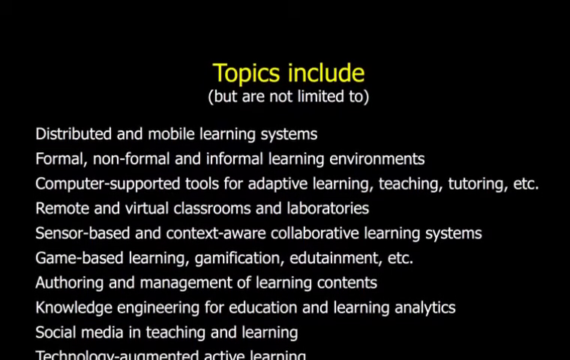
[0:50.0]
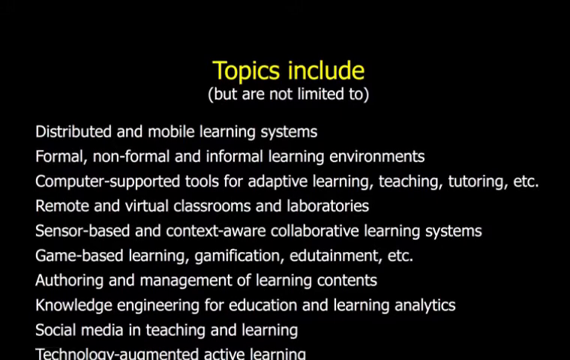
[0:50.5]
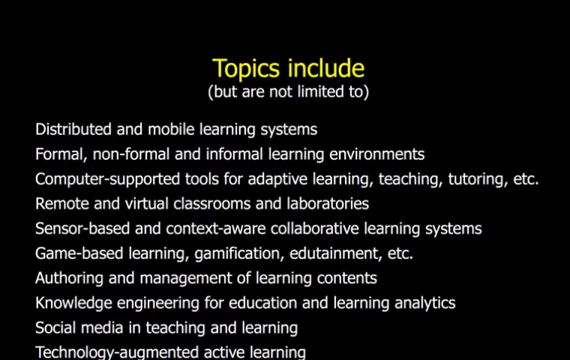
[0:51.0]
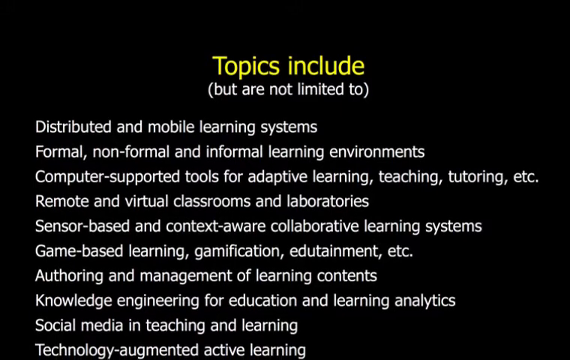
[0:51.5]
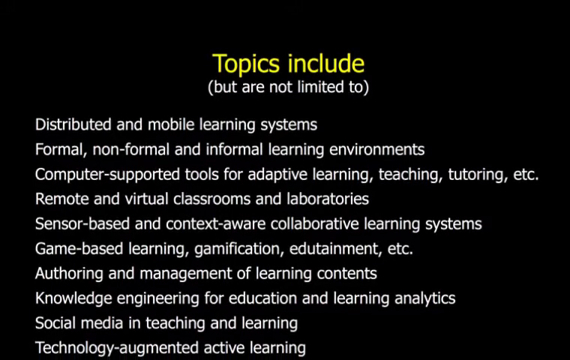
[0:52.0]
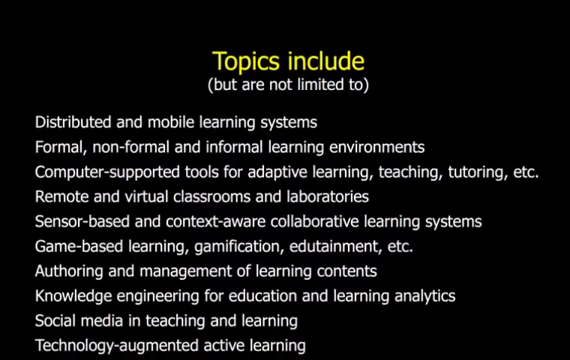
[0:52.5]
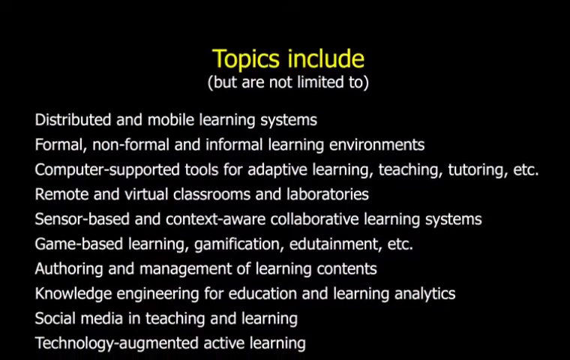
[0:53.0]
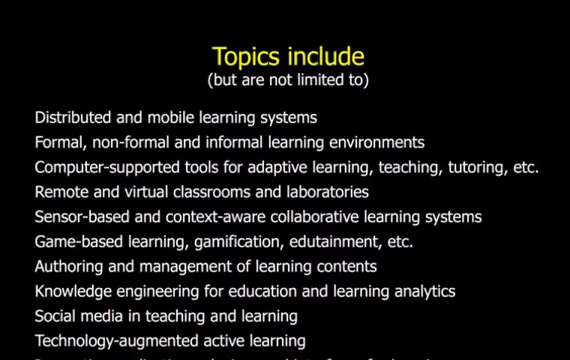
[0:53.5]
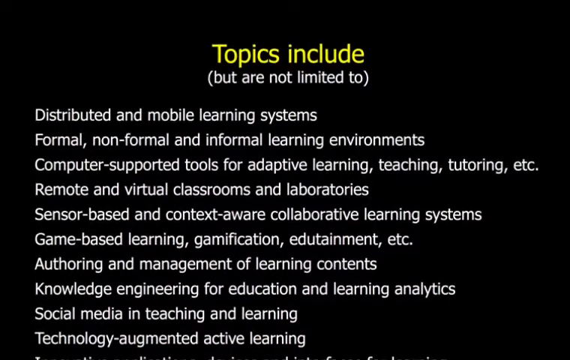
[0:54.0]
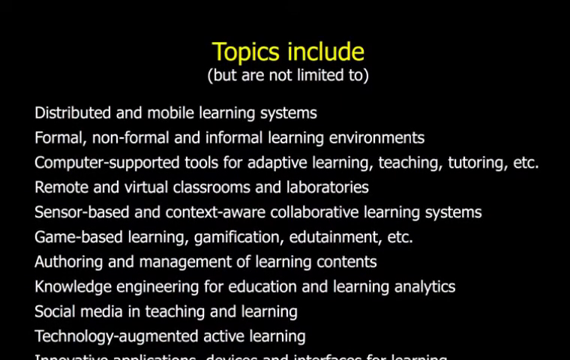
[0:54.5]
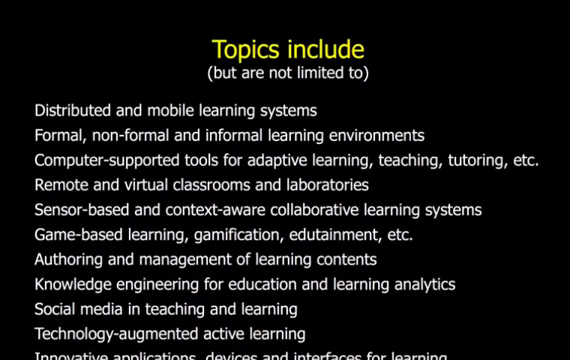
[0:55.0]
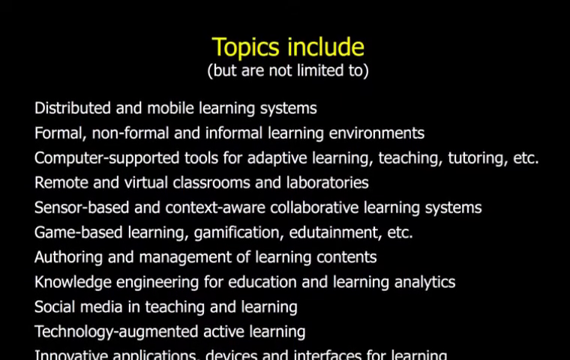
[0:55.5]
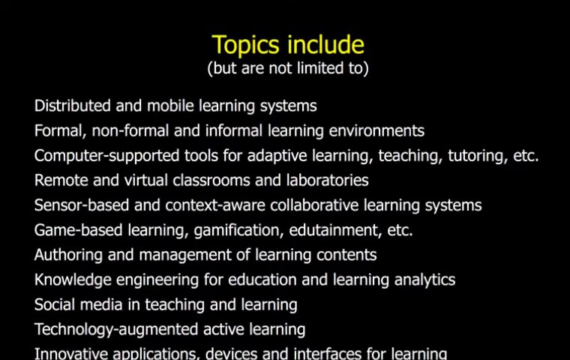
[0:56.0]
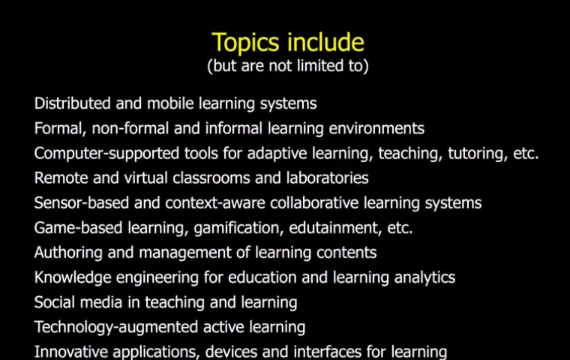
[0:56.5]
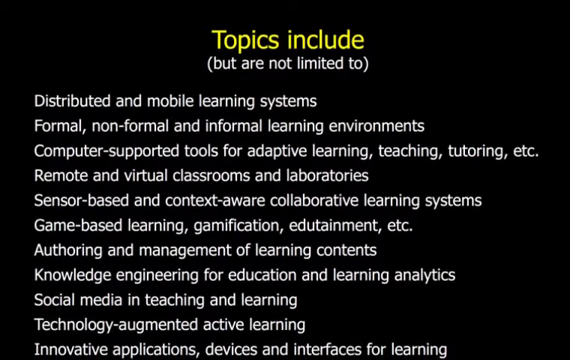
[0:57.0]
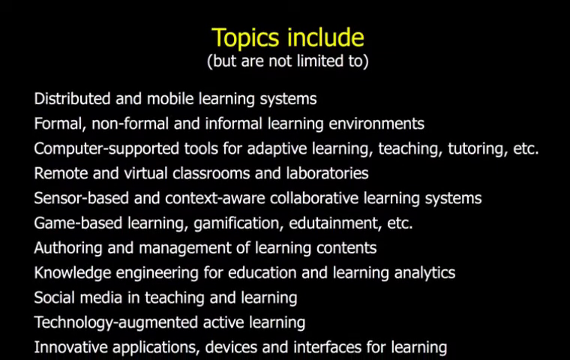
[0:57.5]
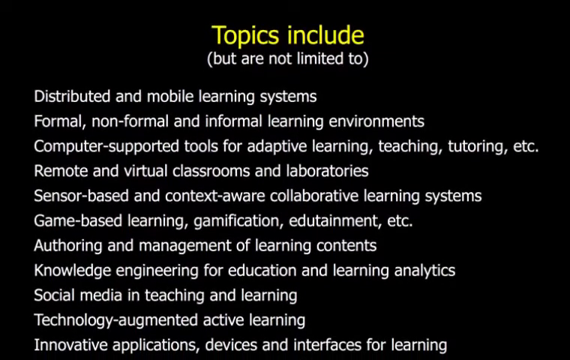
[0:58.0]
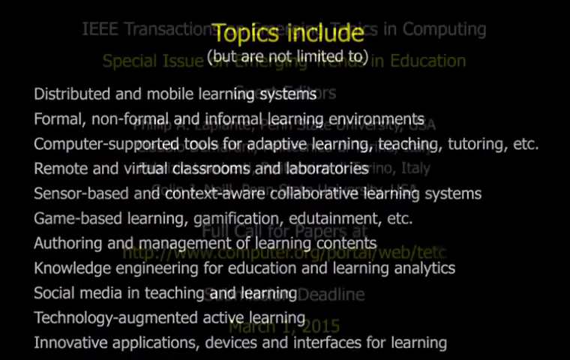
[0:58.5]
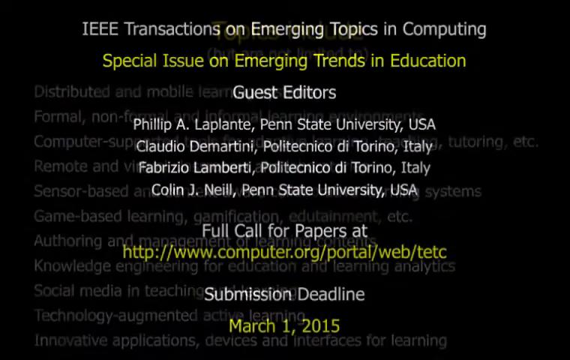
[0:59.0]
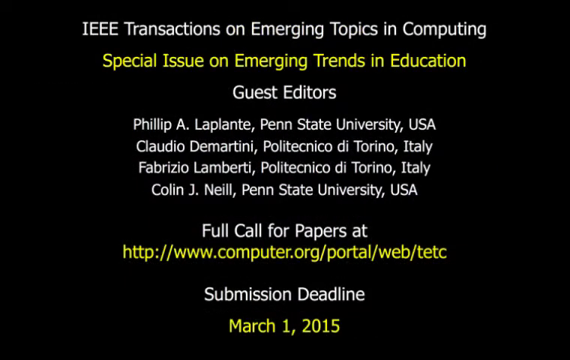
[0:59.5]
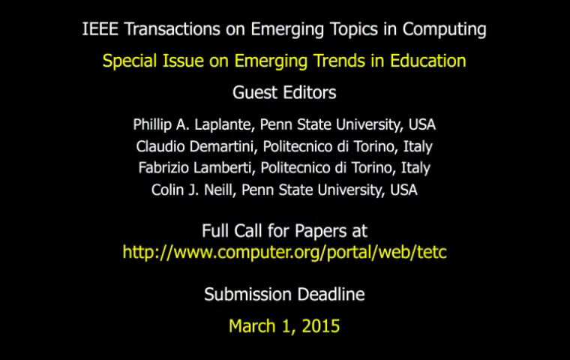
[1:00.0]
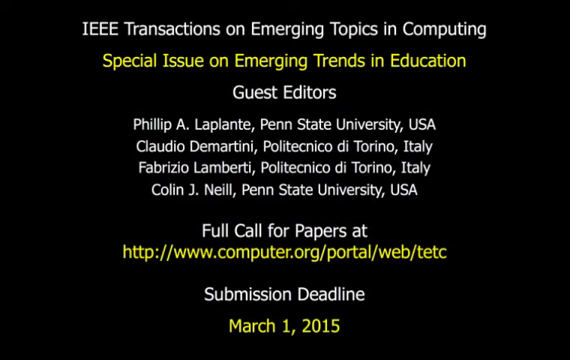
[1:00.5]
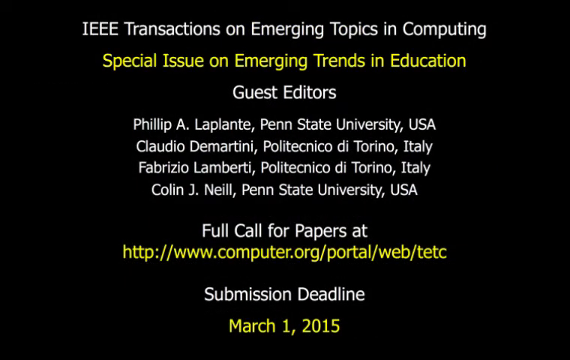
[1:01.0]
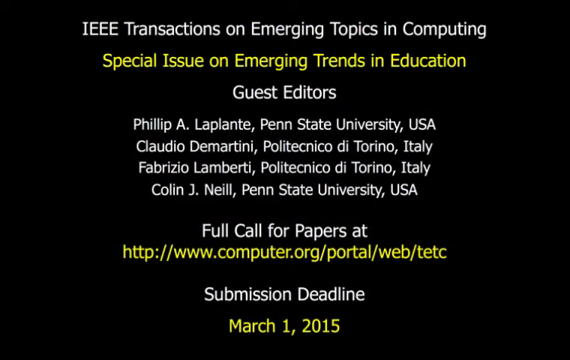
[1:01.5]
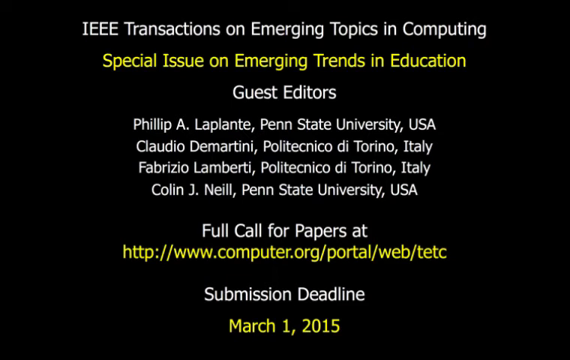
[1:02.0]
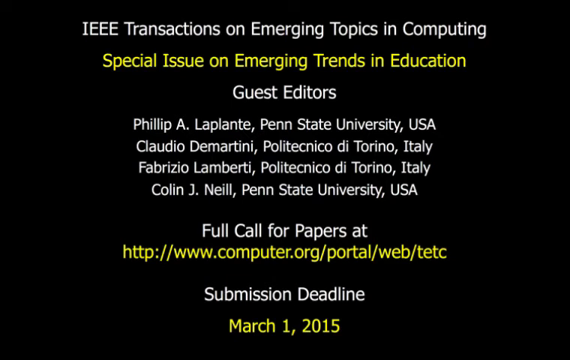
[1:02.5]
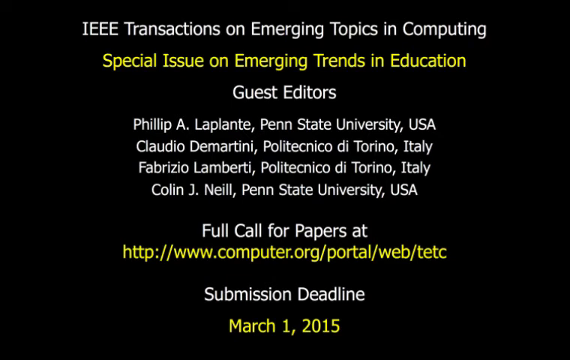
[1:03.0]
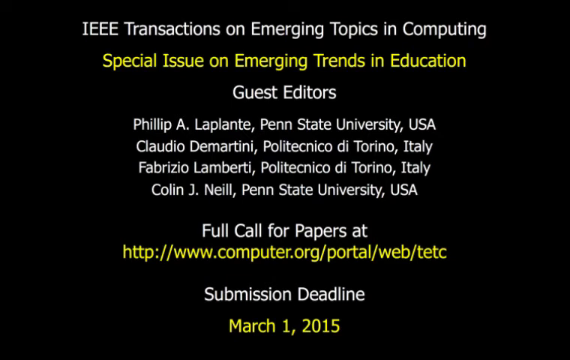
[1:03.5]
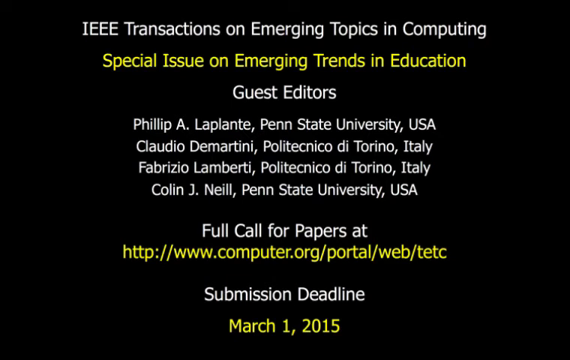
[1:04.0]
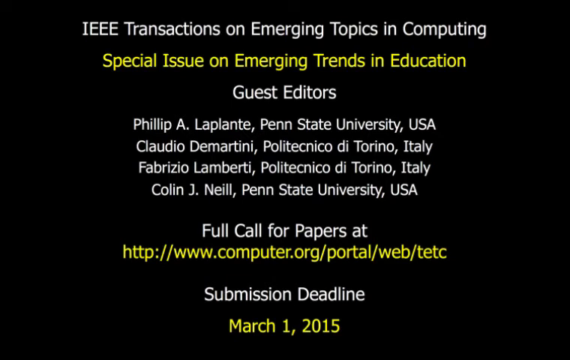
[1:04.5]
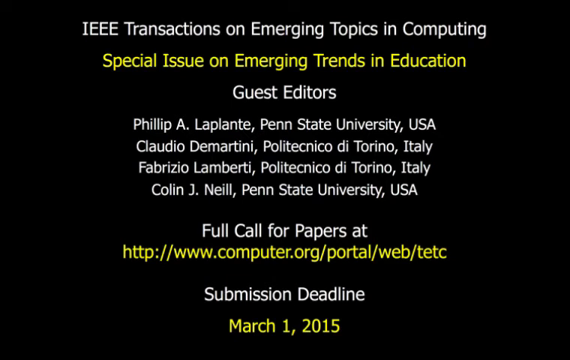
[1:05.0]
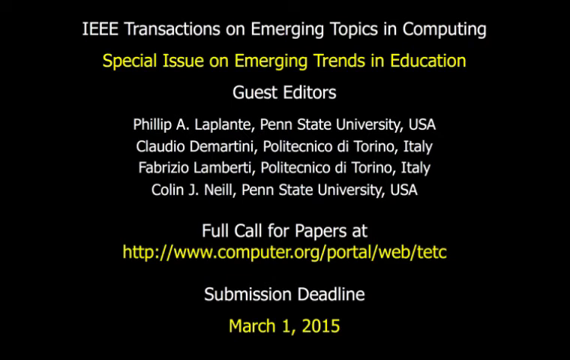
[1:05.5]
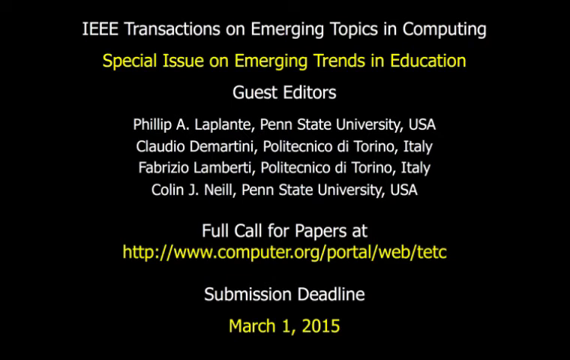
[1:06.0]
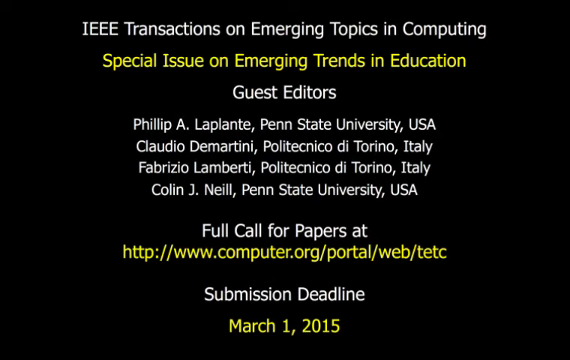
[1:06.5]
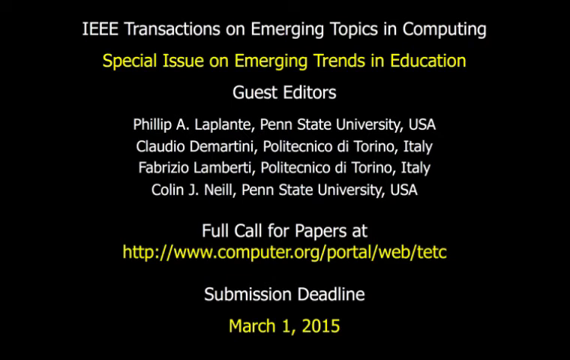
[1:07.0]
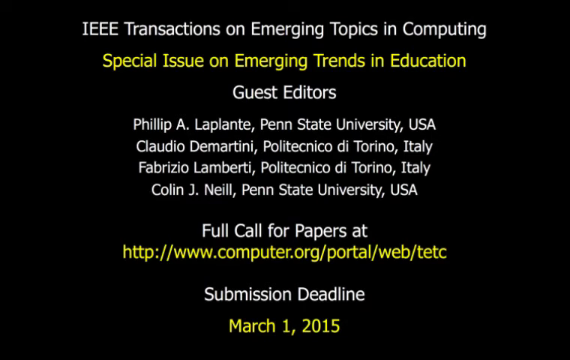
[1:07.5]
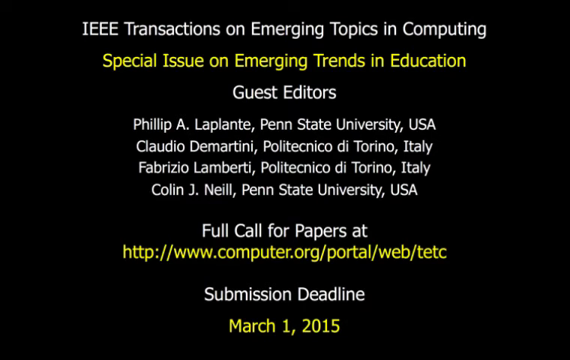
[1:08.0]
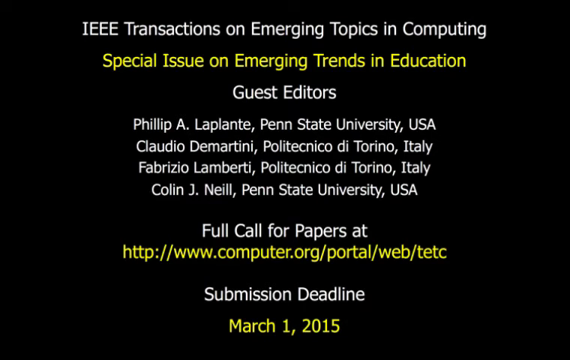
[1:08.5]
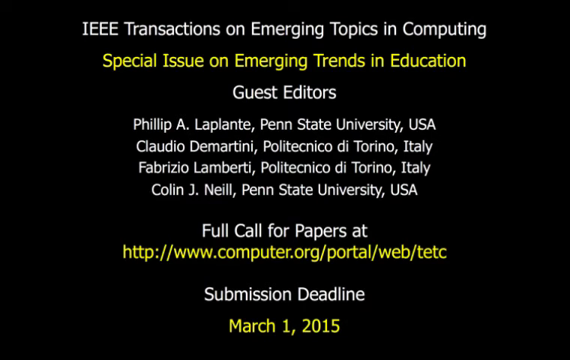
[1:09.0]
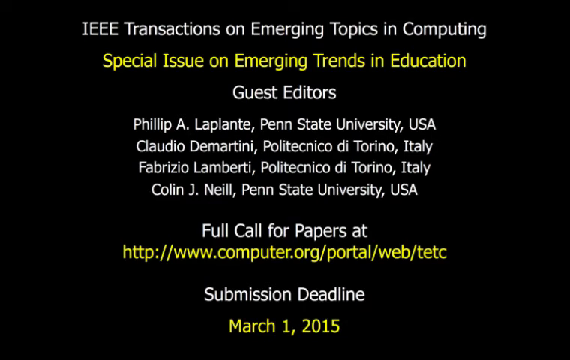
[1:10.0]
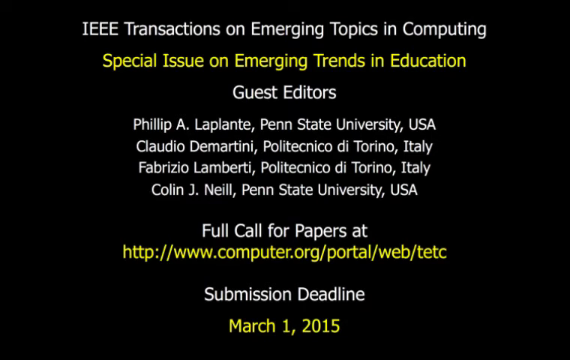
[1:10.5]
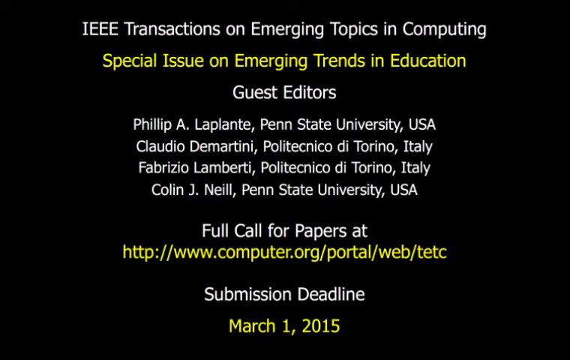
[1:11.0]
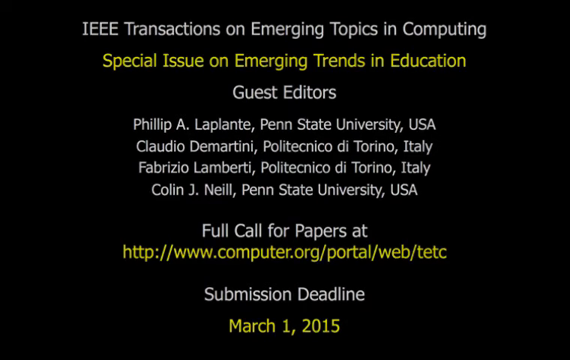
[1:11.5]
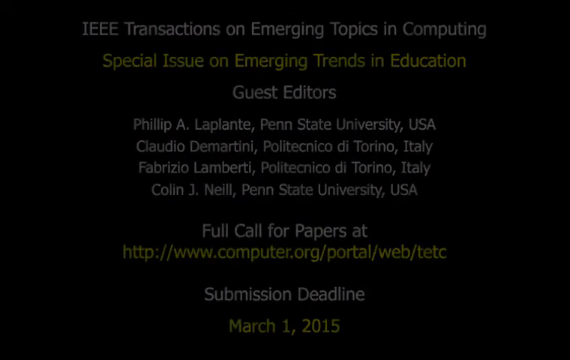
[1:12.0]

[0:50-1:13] The scrolling text continues, including a line about the topics included and mentioning IEEE and topics in computing. Names are listed: Philippe Laplante, Penn State University, USA; Claudio D'Ortini, Politecnico Titorino, Italy; Fabrizio Lampet, Politecnico Titorino, Italy; and Colin J. Neal, Penn State University, United States of America. Below, "call for papers" is written along with the website "www.computer.org".